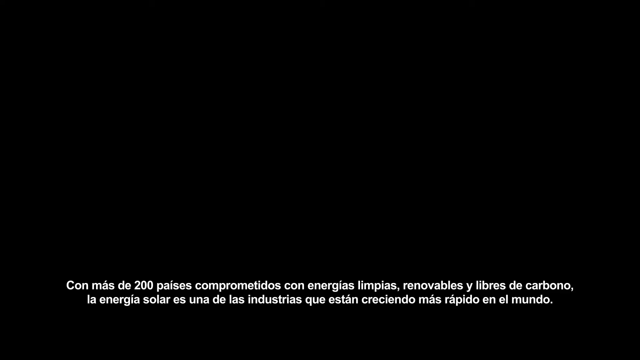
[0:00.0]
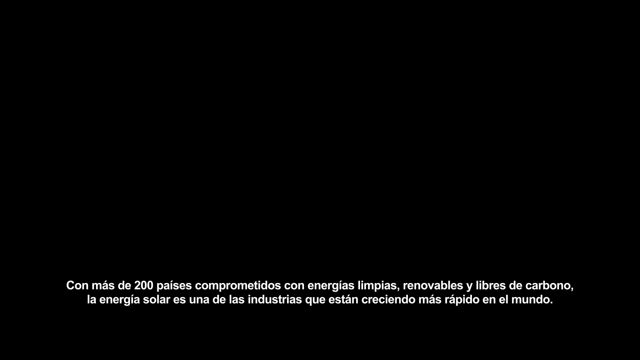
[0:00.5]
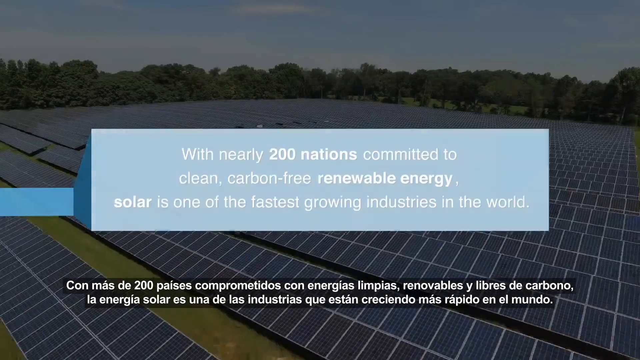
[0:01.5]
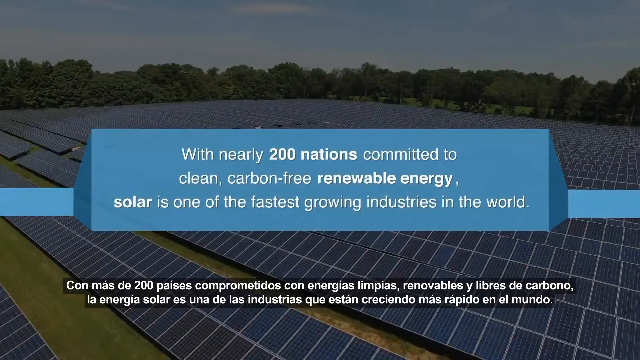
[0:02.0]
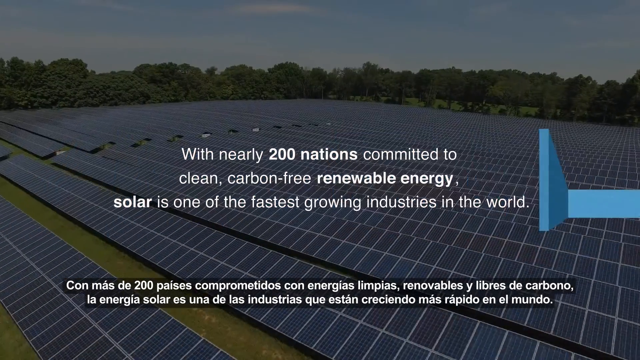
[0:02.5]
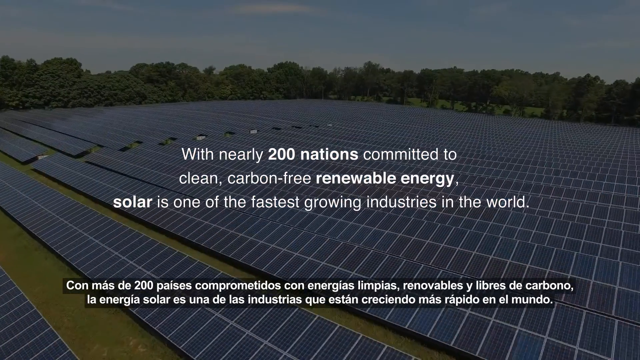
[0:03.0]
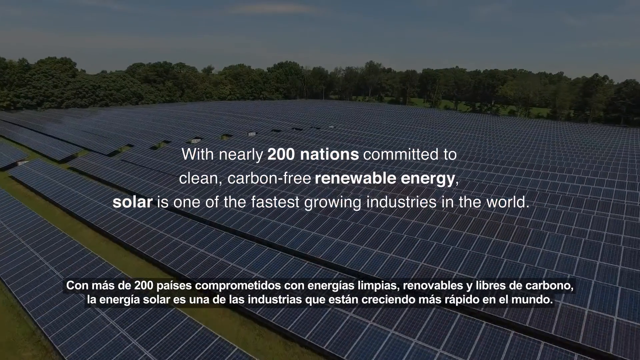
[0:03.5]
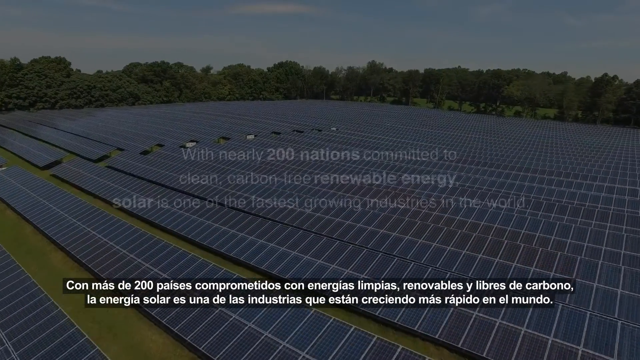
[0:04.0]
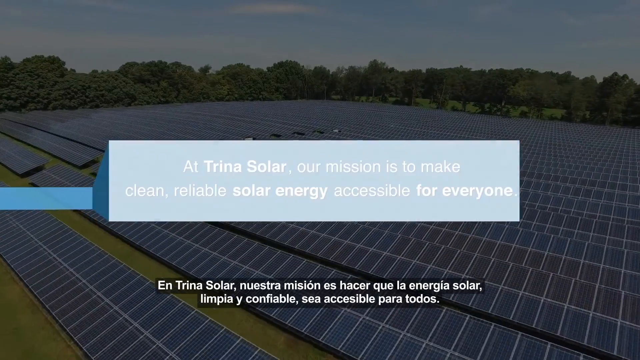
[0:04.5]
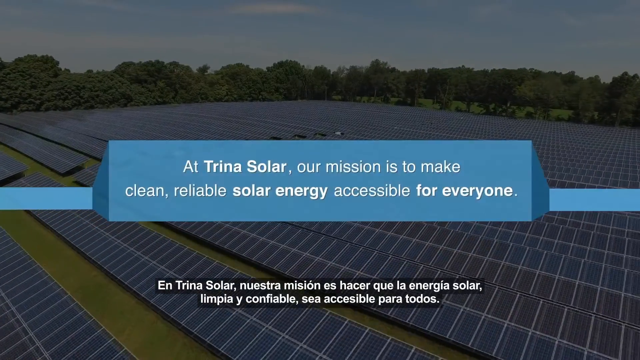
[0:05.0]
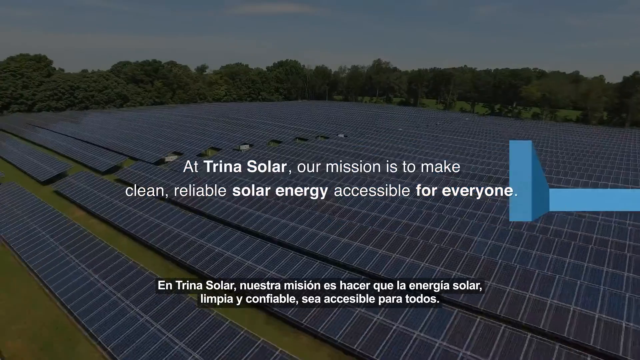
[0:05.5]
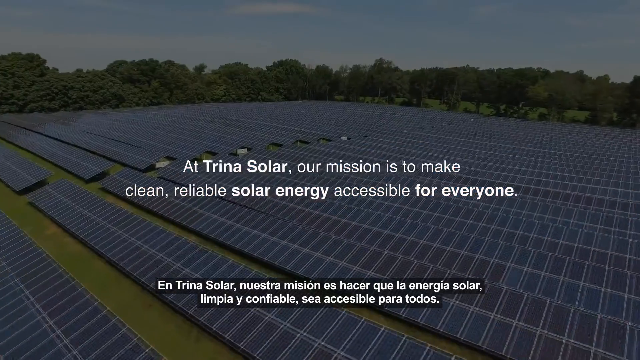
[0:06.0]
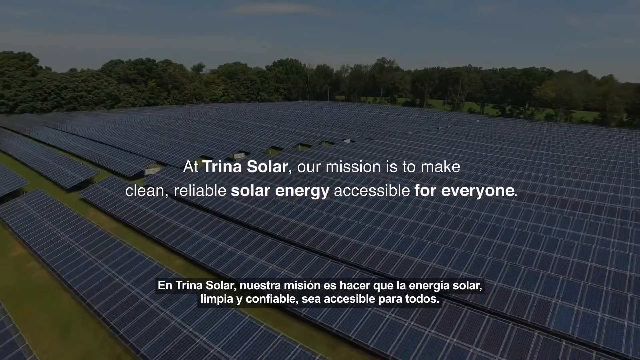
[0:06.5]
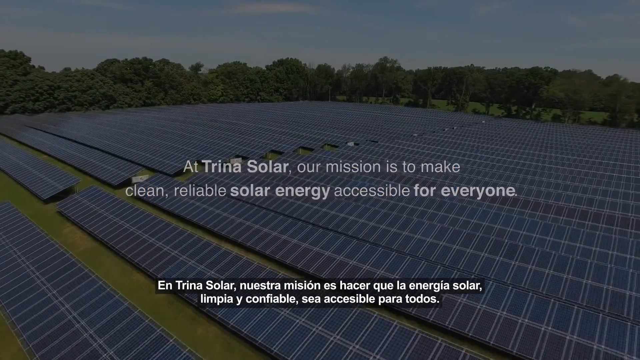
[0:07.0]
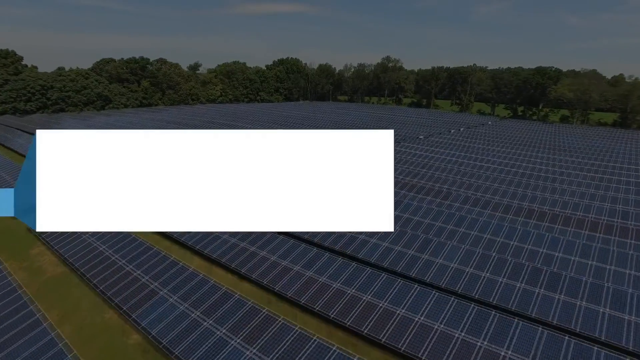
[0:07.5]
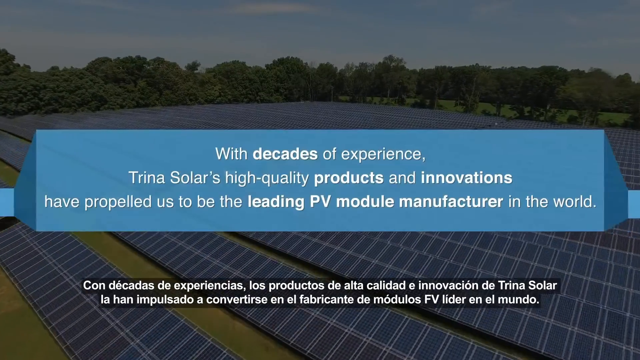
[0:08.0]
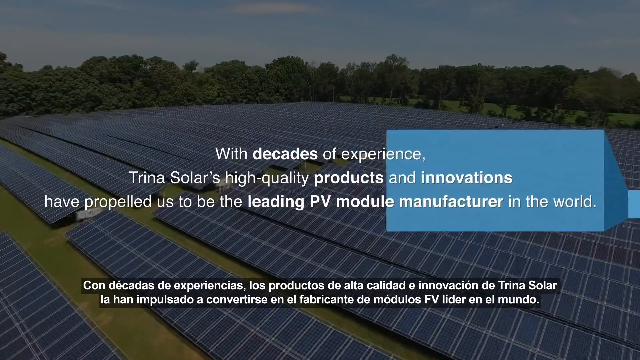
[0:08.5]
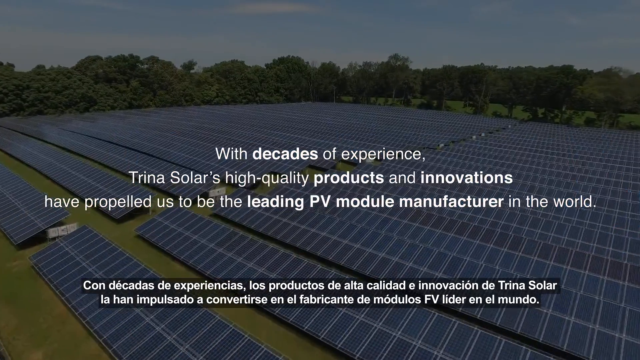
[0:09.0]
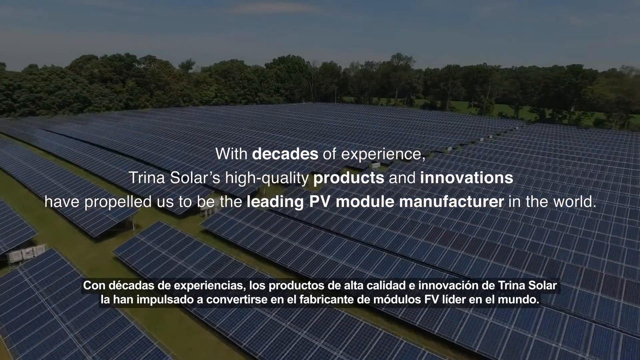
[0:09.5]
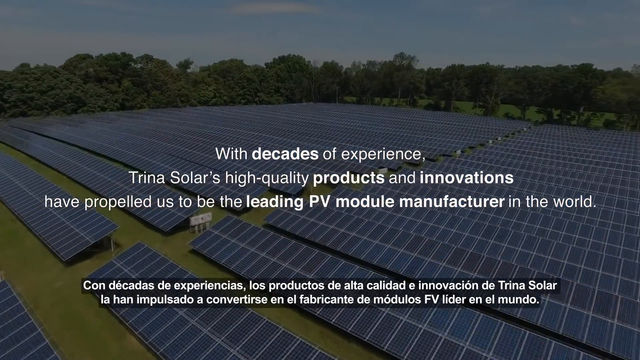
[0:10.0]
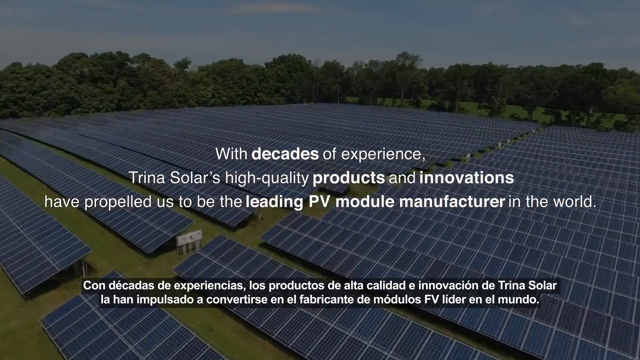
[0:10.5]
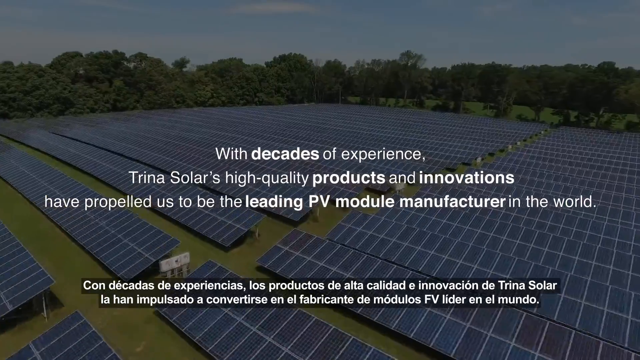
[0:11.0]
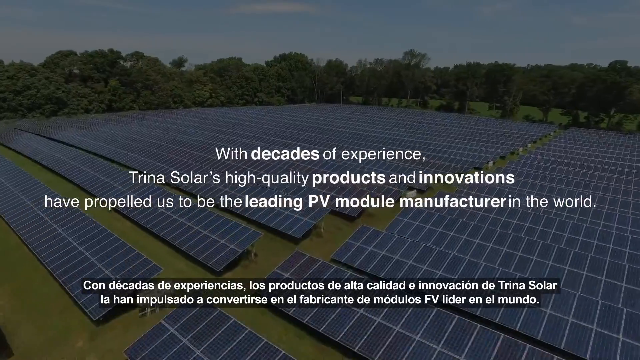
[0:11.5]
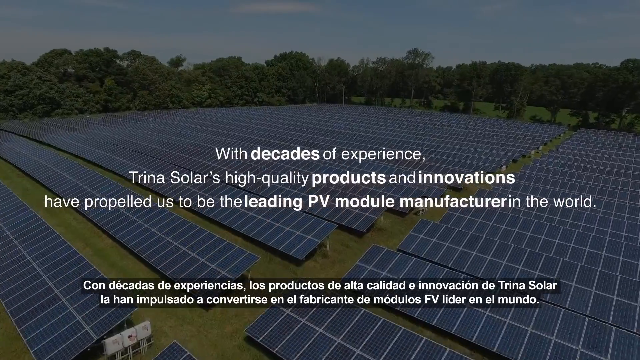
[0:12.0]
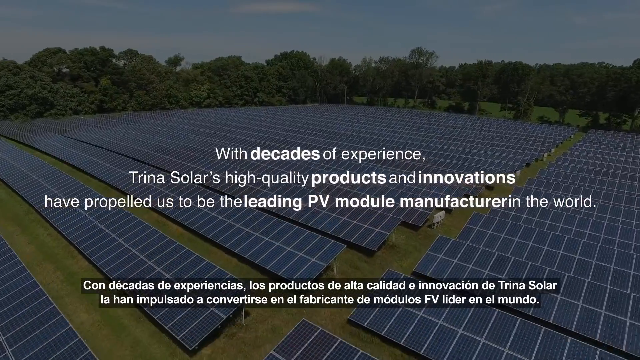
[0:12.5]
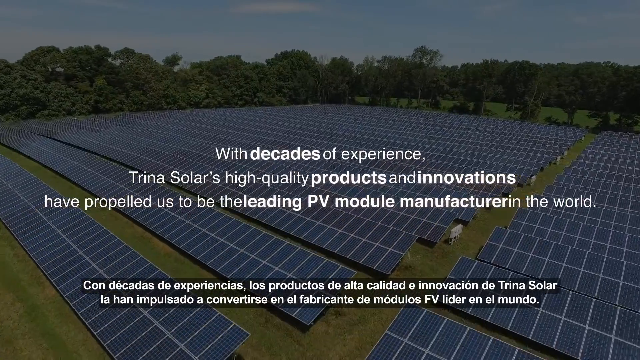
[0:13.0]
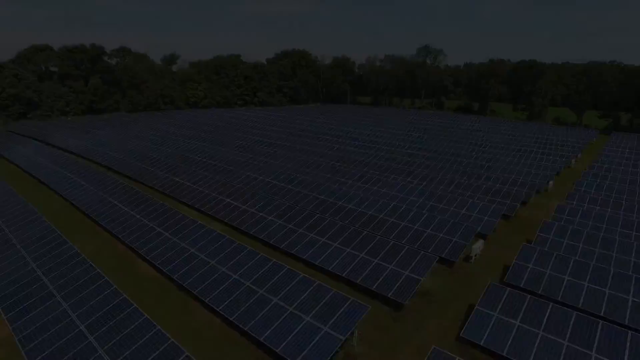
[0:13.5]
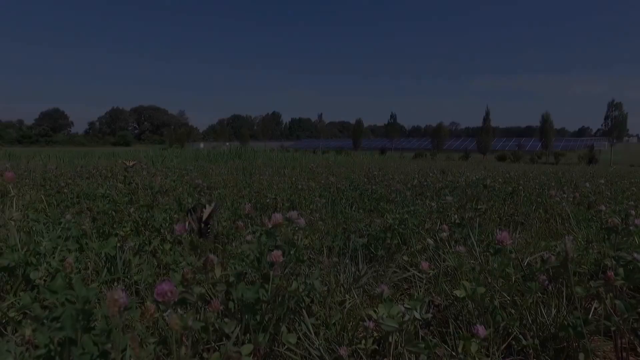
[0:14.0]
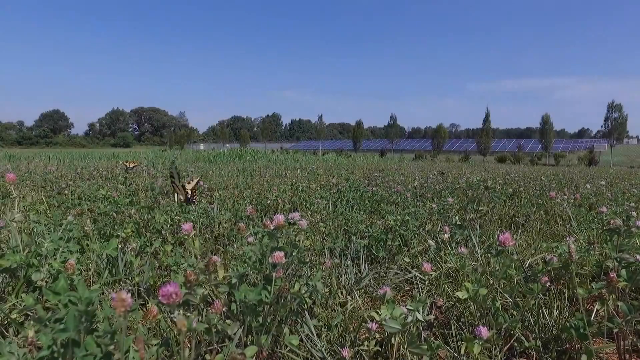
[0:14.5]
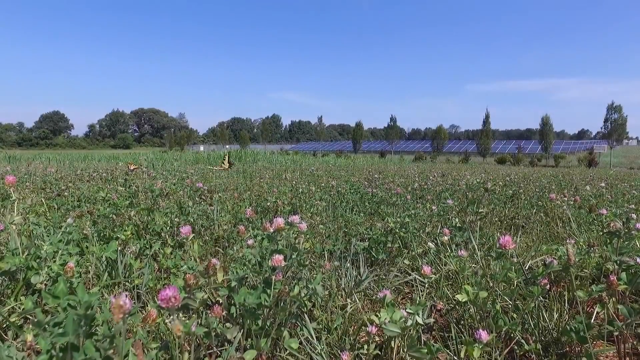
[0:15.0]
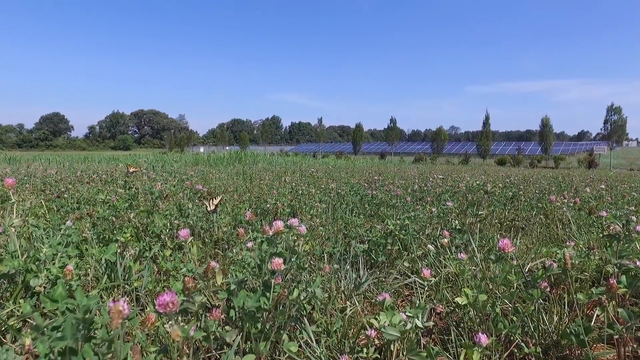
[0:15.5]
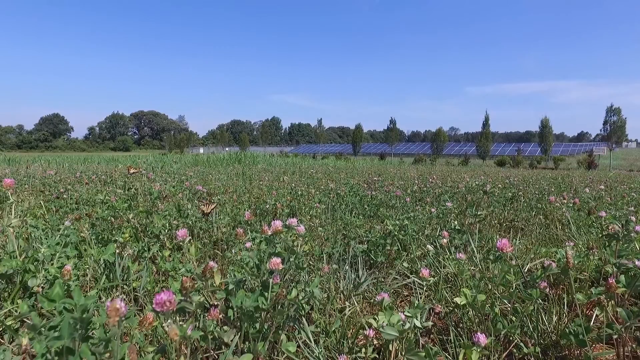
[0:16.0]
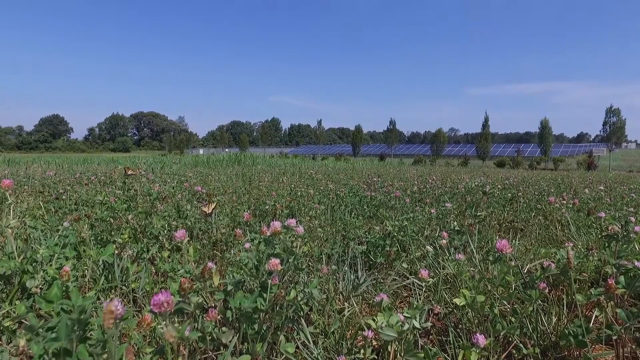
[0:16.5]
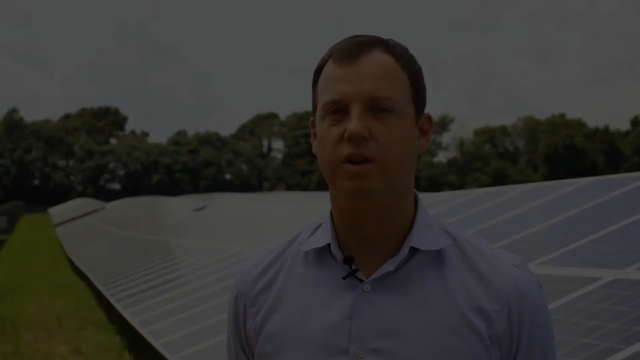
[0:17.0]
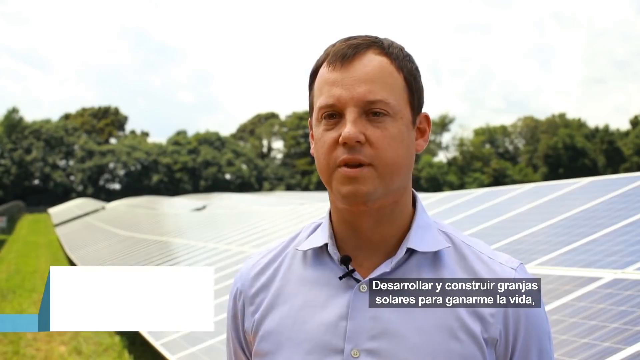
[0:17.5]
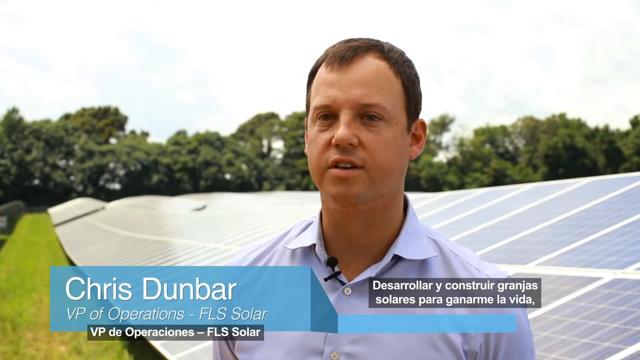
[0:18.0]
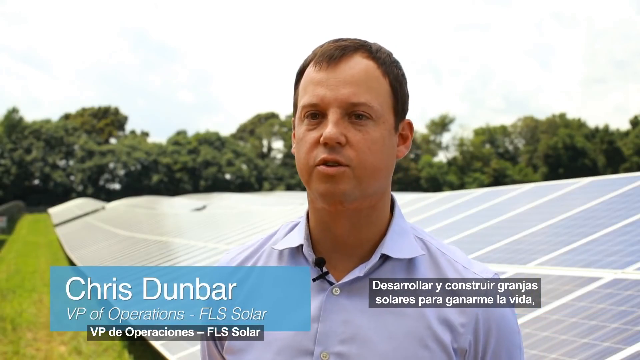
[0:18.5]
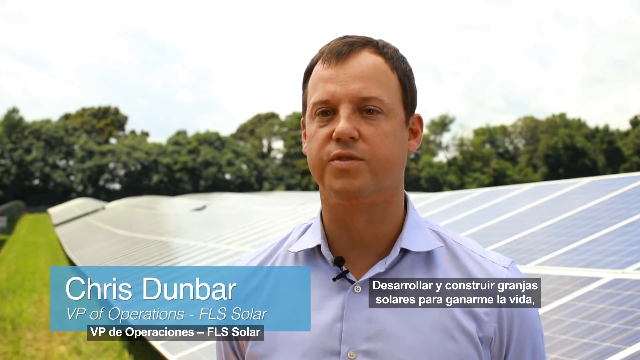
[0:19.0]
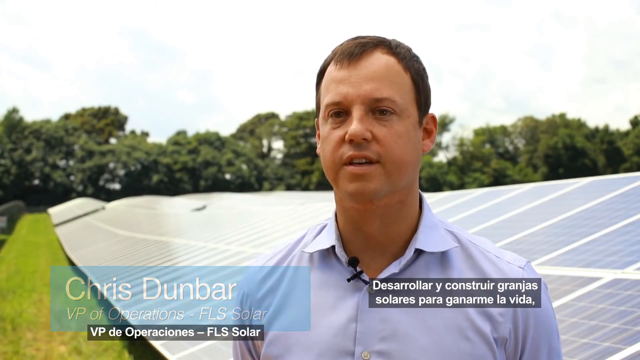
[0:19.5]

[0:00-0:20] A black screen appears with Spanish words at the bottom, which look like subtitles. In the middle of the screen, text reads "with nearly 200 nations committed to clean, carbon-free renewable energy, solar is one of the fastest-growing industries in the world." Behind this text is a massive field full of solar panels all across the ground, surrounded by large green trees. The video cuts to another message saying "at Trinus Solar, our mission is to make clean, reliable solar energy accessible for everyone." It then cuts to another text that says "with decades of experience, Trinus Solar's high-quality products and innovations have propelled us to be the leading PV module manufacturer in the world." Next, a field with butterflies appears, with the solar panels visible in the distance in the background.